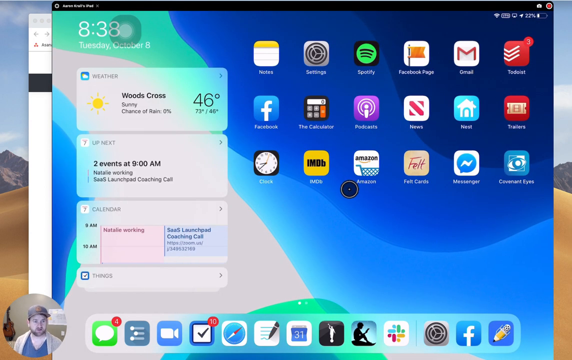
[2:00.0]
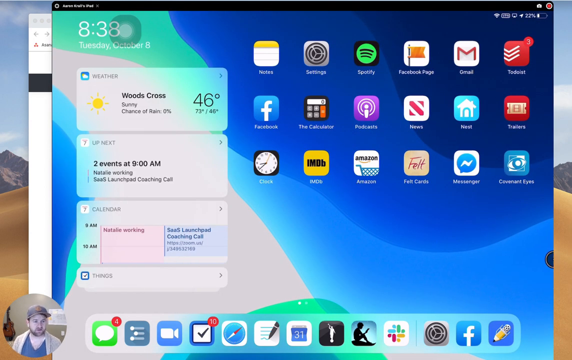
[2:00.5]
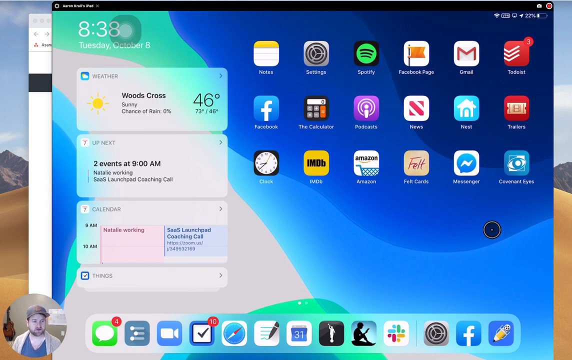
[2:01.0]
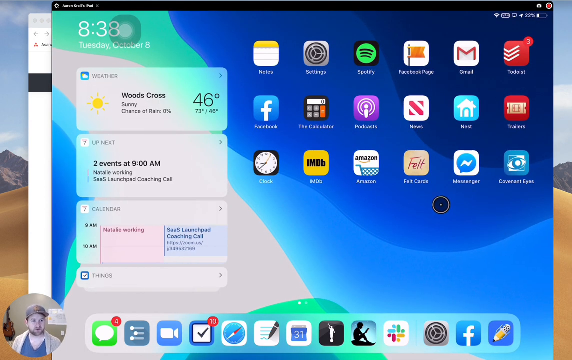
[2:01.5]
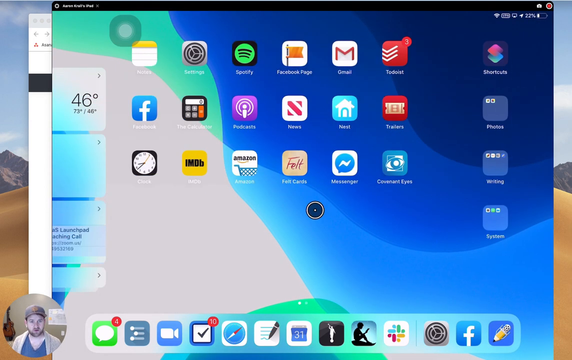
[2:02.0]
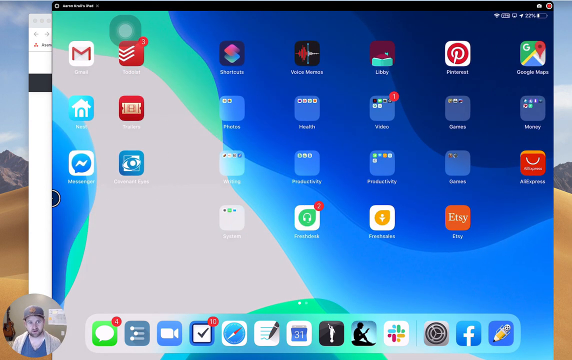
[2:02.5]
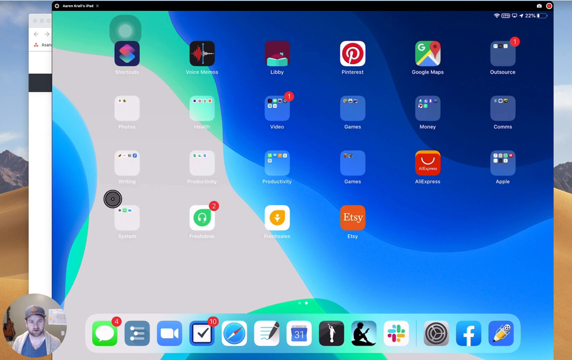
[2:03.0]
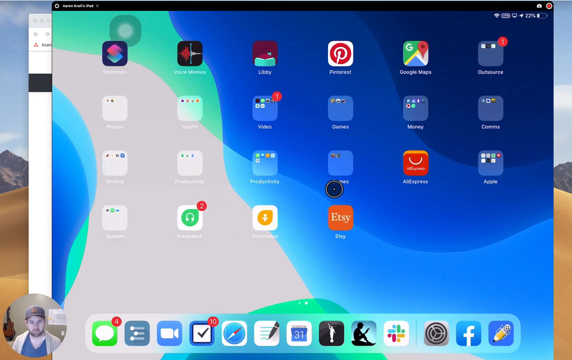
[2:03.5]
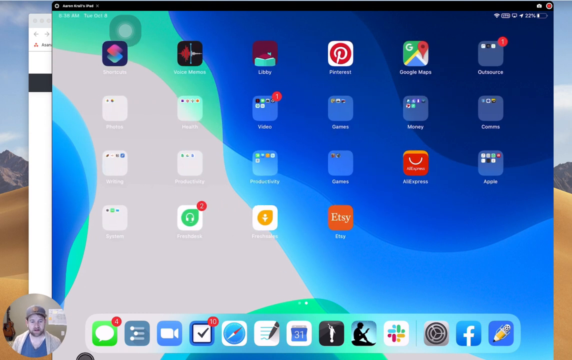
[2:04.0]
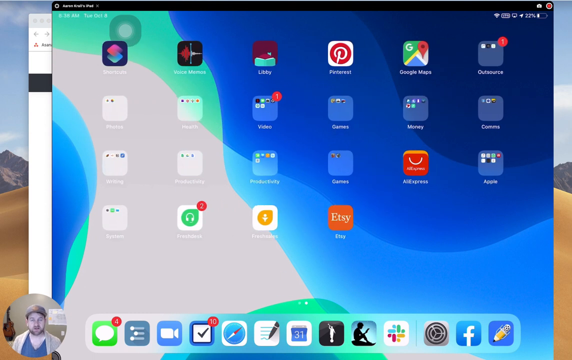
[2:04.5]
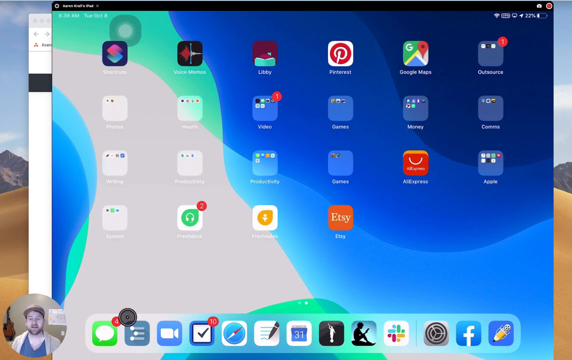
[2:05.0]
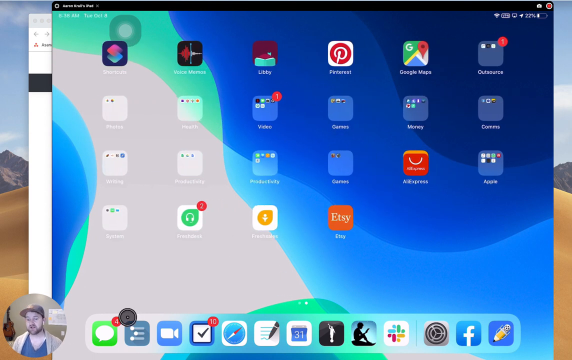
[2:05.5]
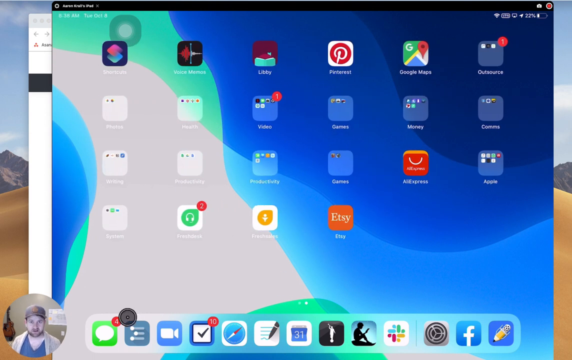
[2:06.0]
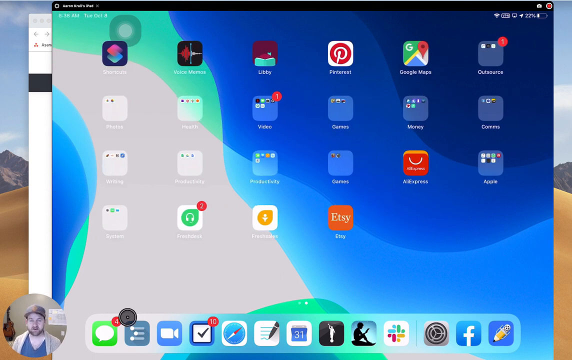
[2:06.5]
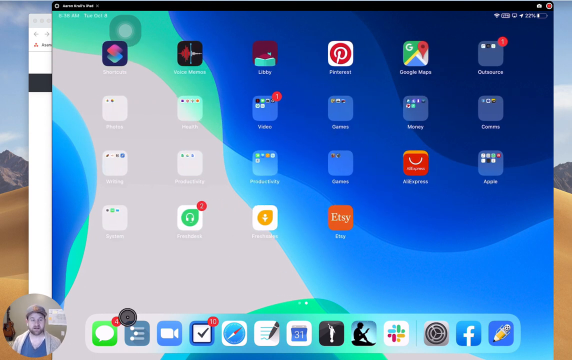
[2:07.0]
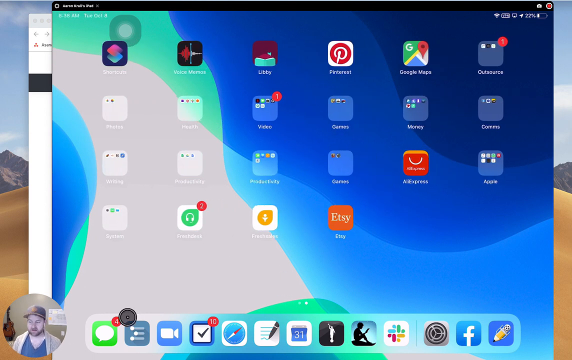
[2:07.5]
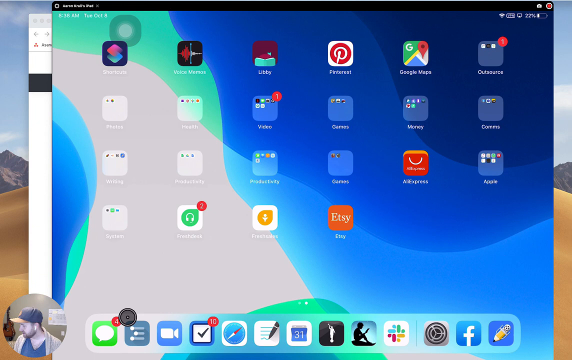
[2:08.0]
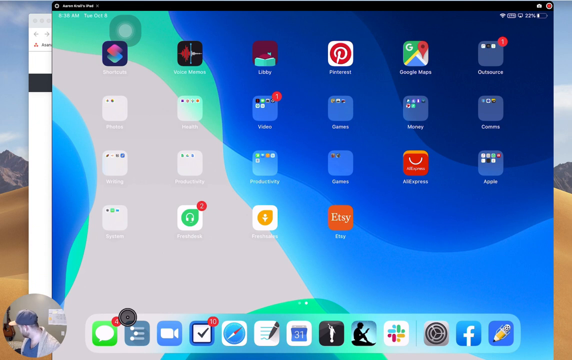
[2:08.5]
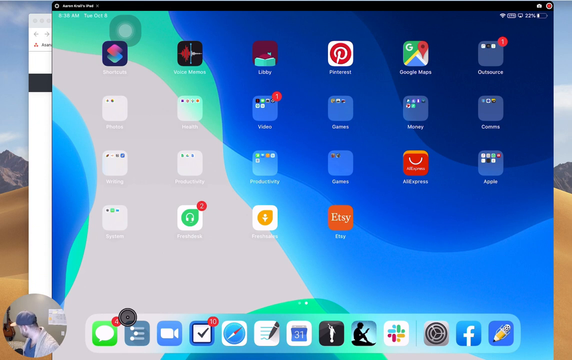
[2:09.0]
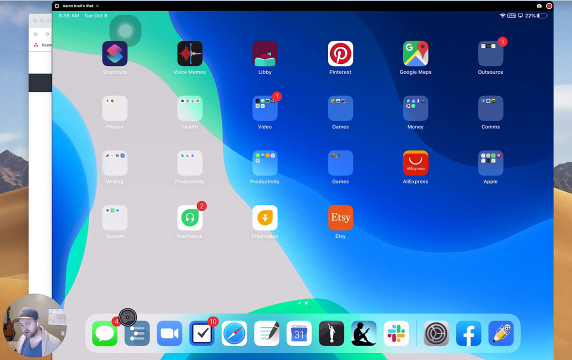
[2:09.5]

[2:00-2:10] Several computer keyboards appear in the screen share as the man navigates through different apps in a careless fashion. In the bottom left section of the screen, he looks directly into the computer screen and looks very enthusiastic as he moves his computer mouse to different areas.